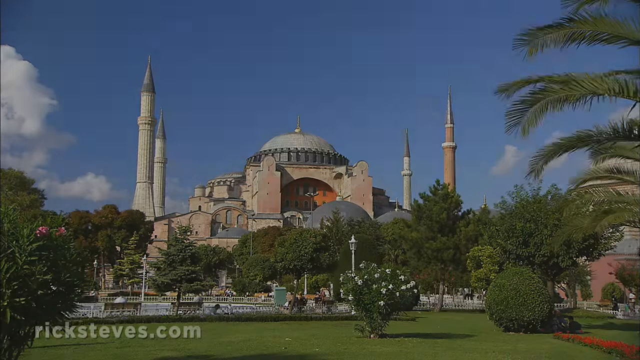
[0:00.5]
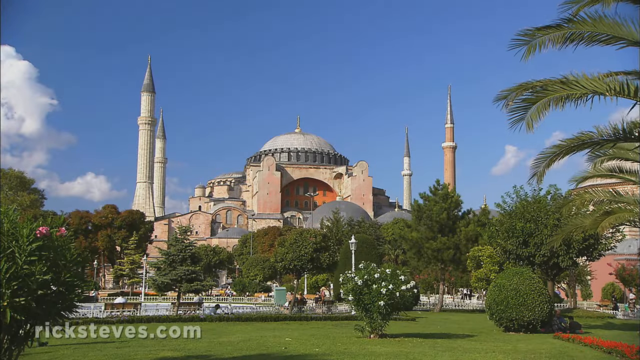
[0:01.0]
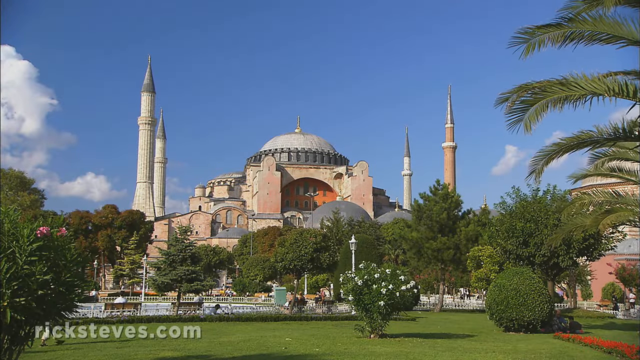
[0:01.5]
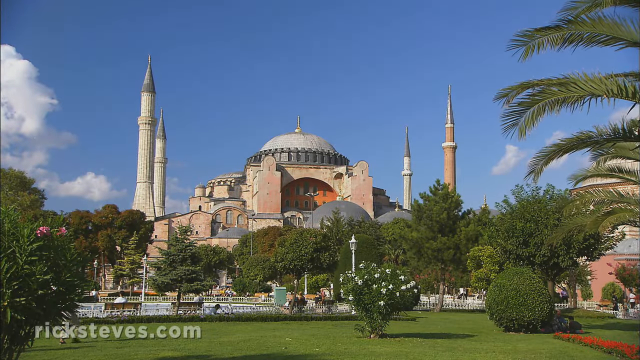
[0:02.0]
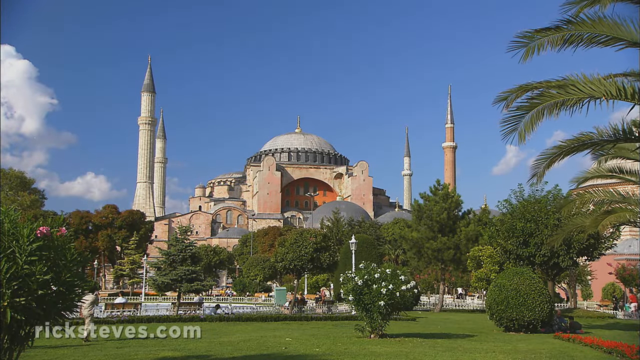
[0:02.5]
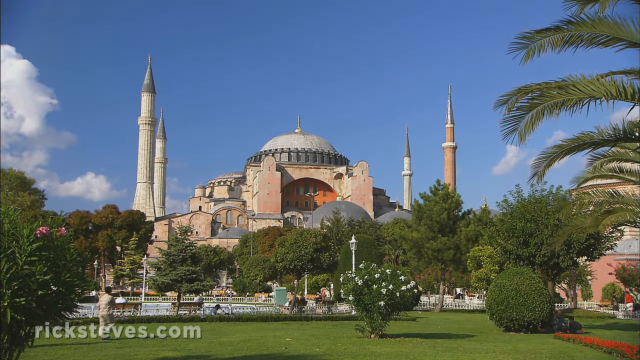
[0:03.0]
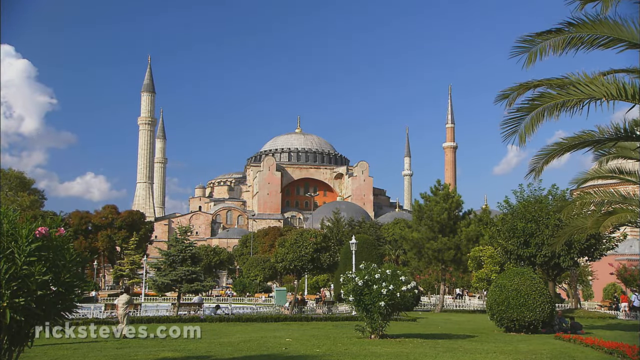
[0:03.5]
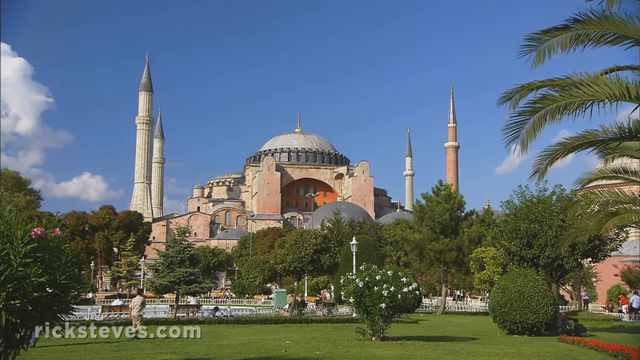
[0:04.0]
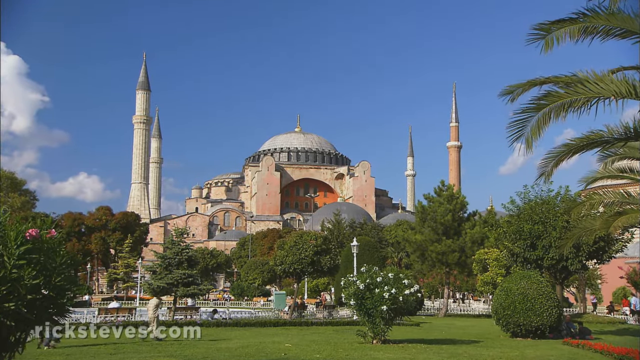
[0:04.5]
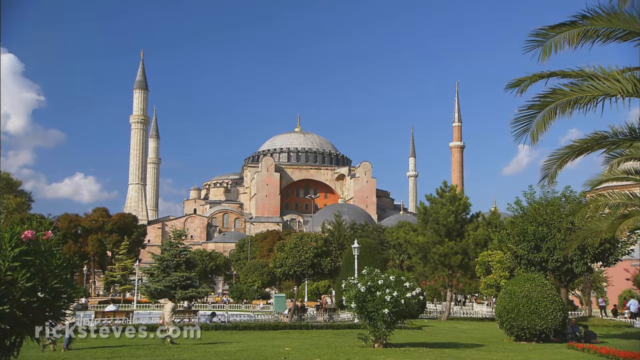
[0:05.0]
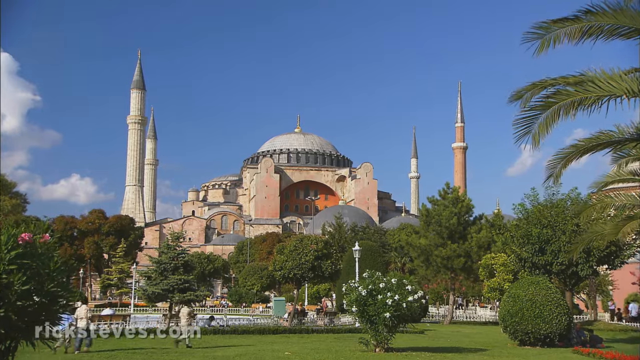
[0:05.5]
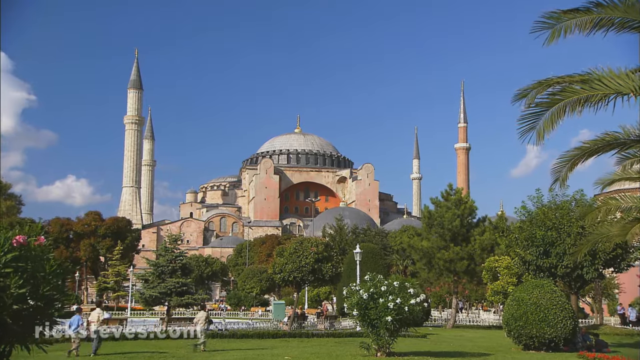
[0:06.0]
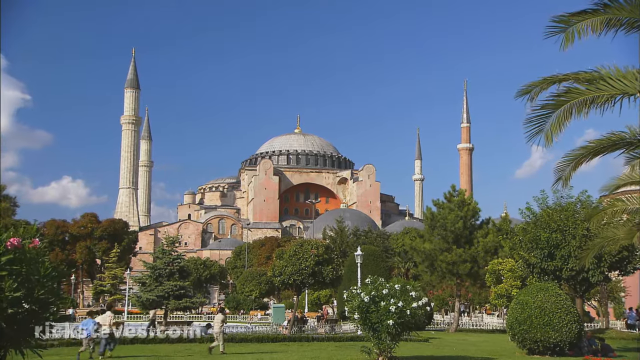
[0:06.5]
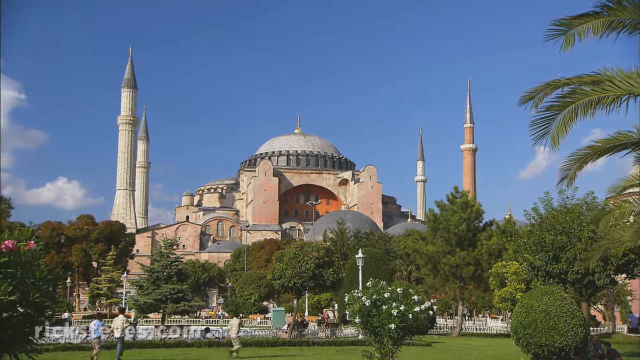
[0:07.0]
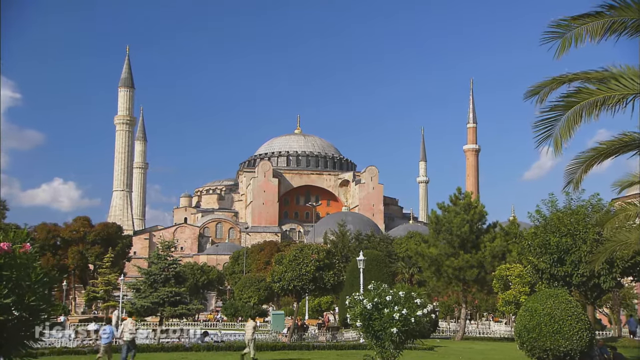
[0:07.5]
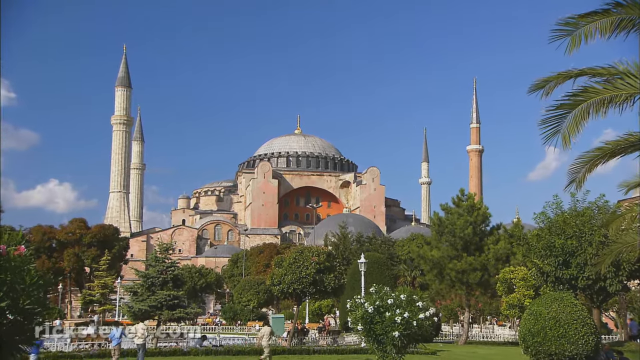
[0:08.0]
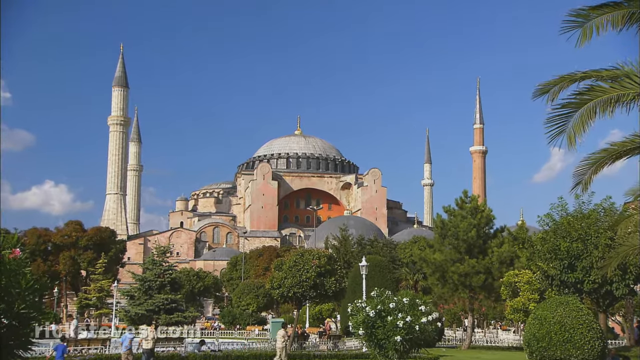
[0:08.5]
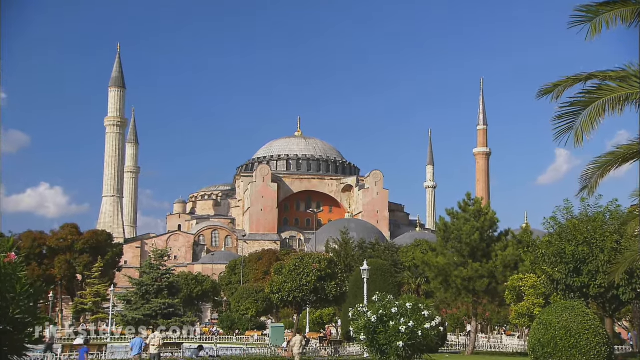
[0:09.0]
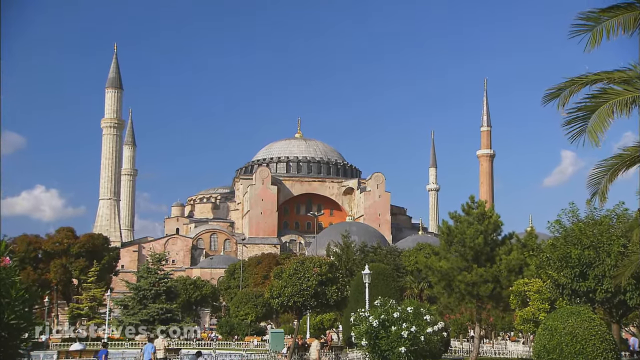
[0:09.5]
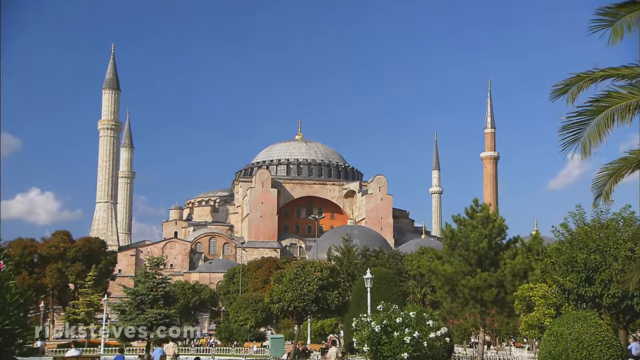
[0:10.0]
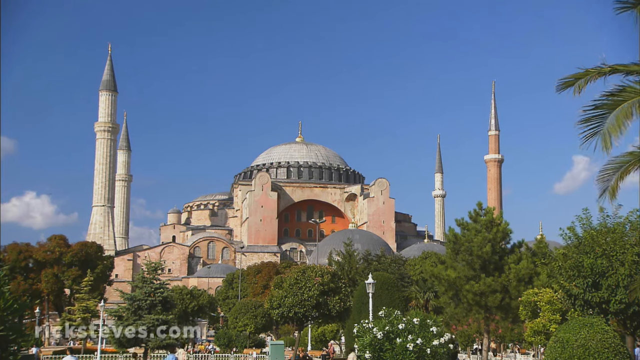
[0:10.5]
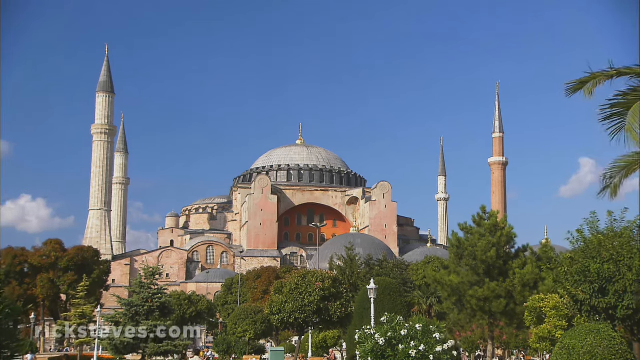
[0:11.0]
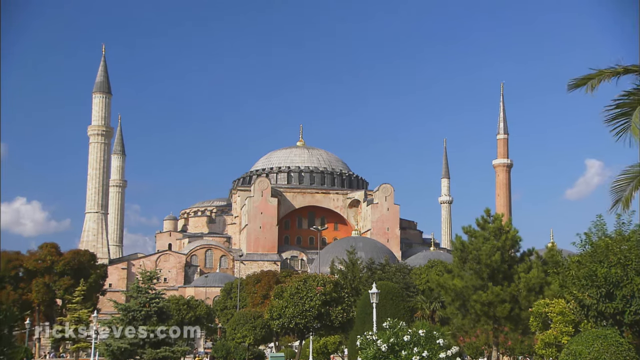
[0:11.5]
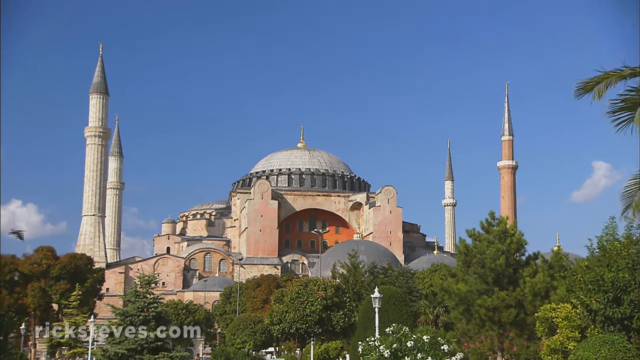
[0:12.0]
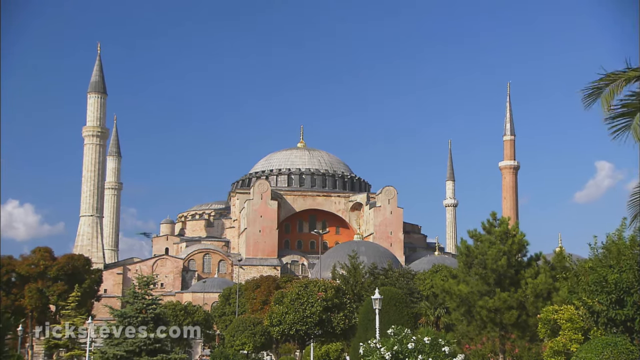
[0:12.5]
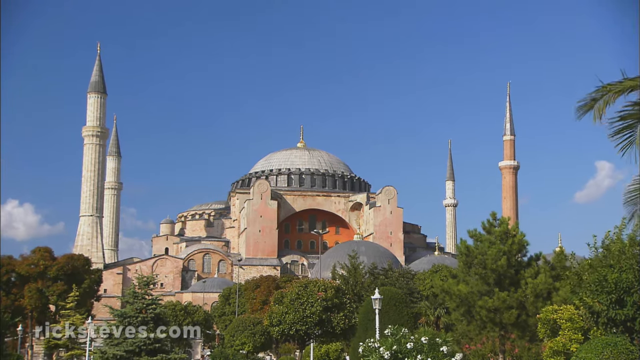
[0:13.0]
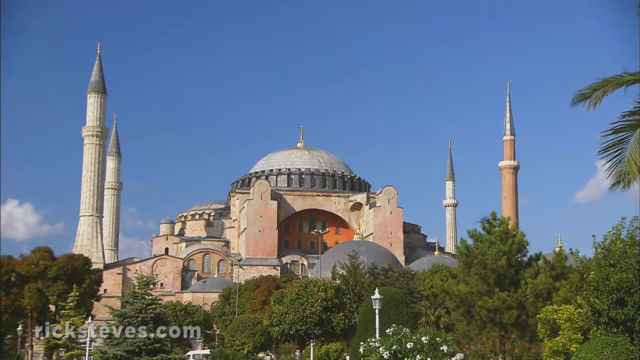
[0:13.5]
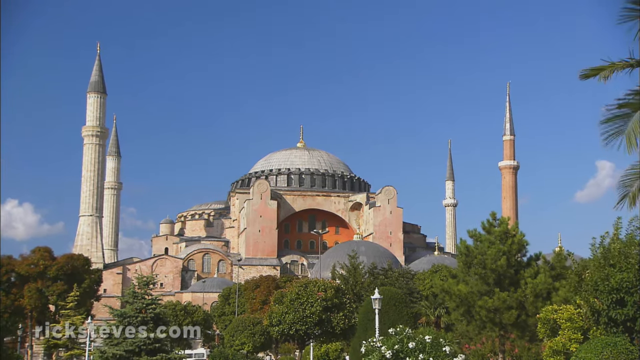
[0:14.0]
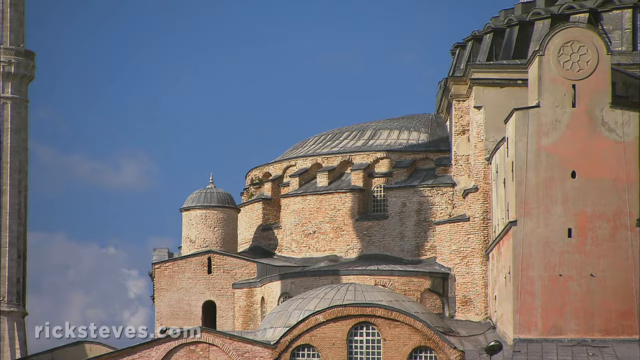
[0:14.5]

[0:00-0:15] The video is a Rick Steves Europe travel guide about Hagia Sophia in Istanbul, Turkey, with a "ricksteves.com" watermark. The setting is apparently a palace. The camera zooms in on the building, which may be a castle or a mosque. It is circular and has four pillars, suggesting it might be a mosque. The building is orange and whitish, with the pillars looking more white. In front there is a garden with many circular, trimmed bushes or trees, floral plants and nice seats. People walk along the pavement, and white fences surround the area. The place seems peaceful and serene.